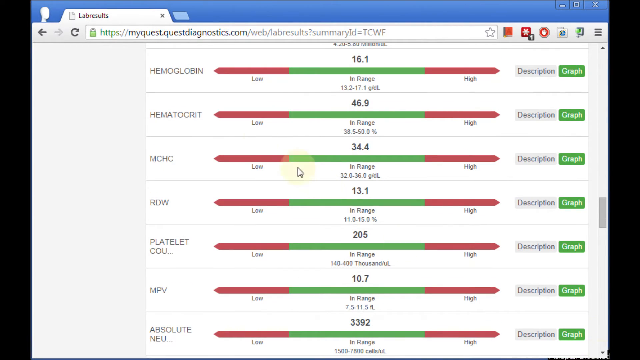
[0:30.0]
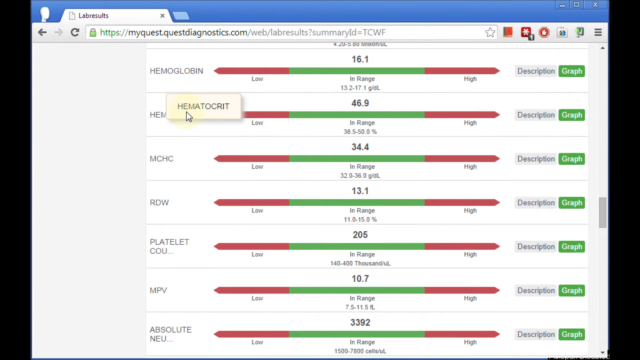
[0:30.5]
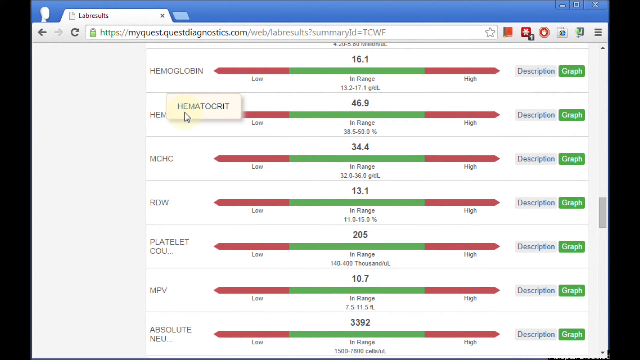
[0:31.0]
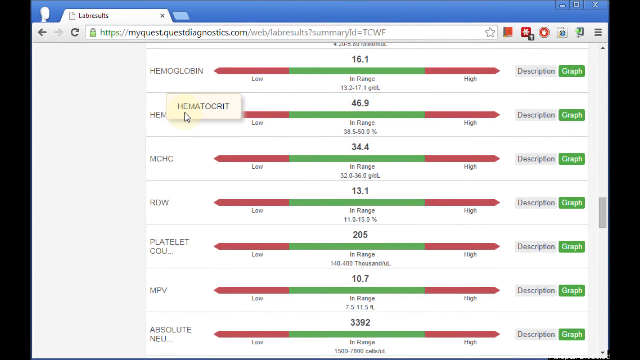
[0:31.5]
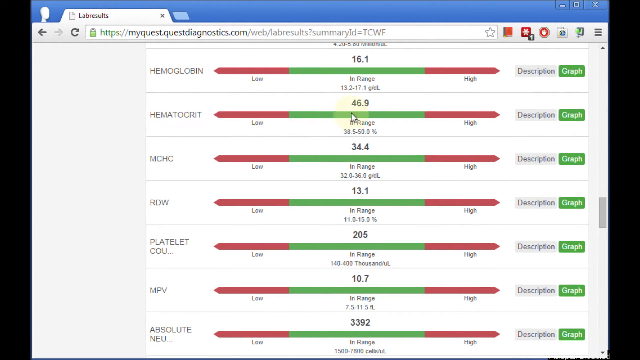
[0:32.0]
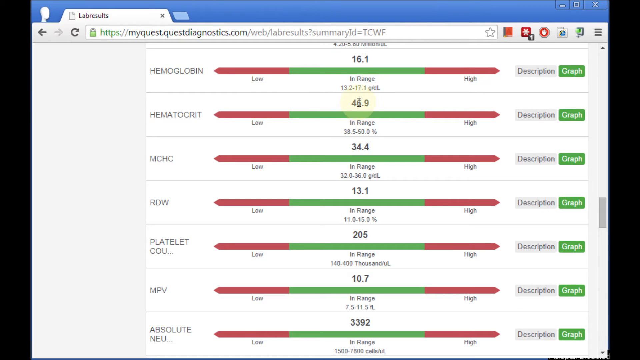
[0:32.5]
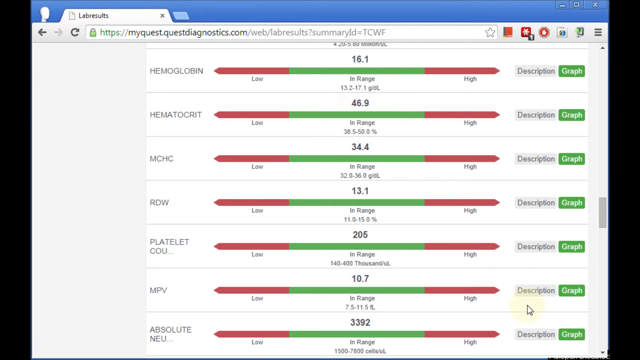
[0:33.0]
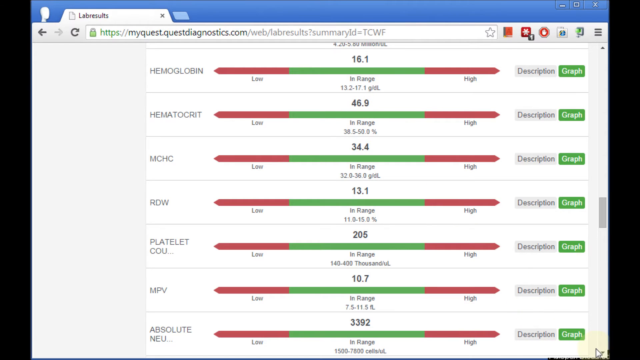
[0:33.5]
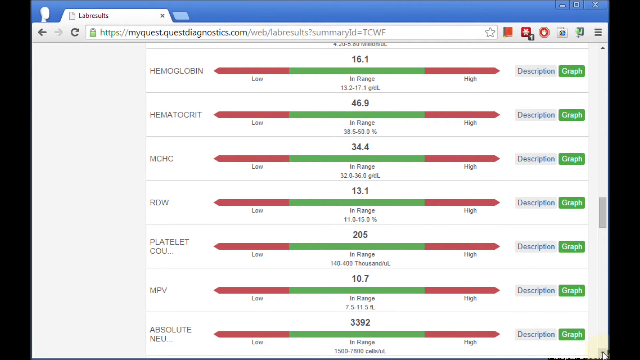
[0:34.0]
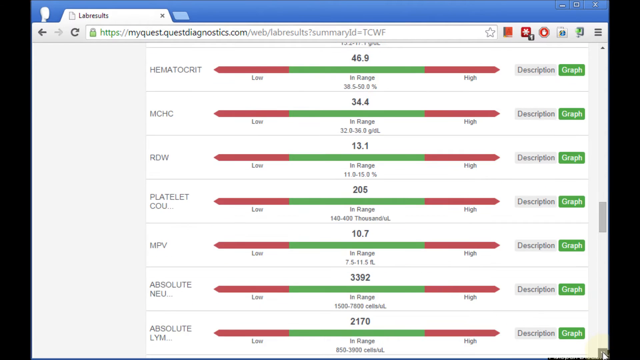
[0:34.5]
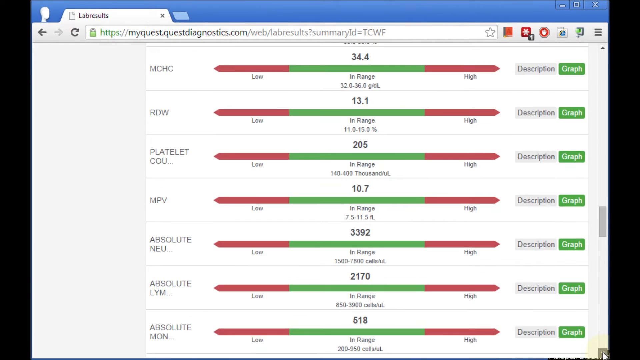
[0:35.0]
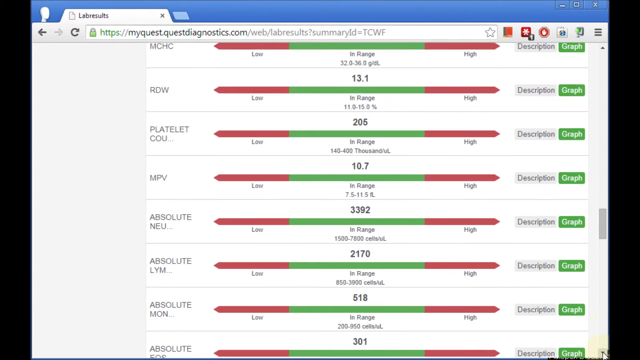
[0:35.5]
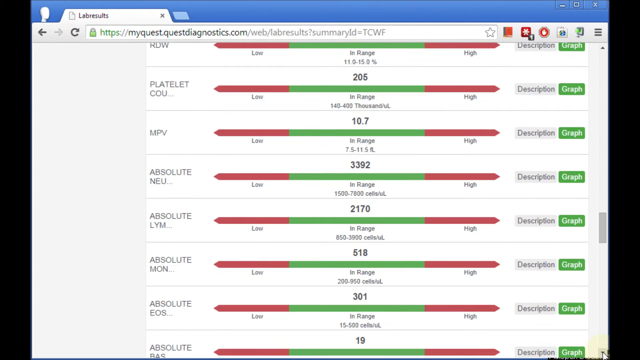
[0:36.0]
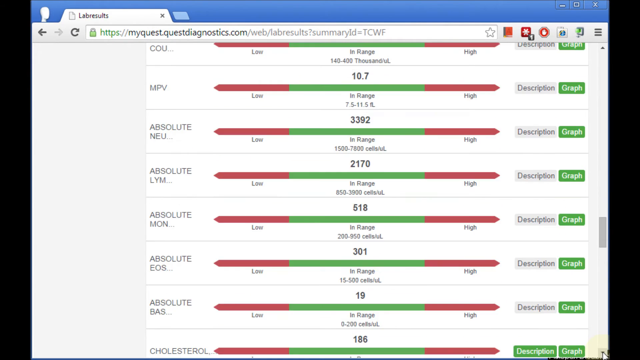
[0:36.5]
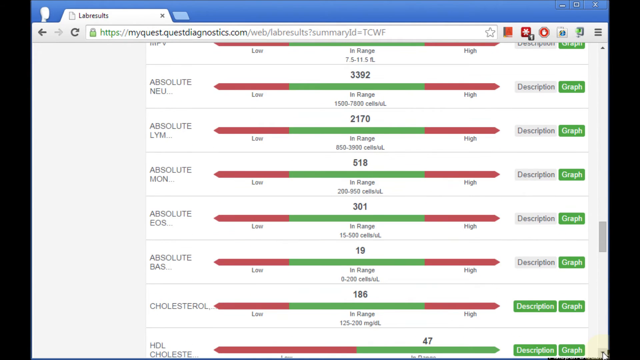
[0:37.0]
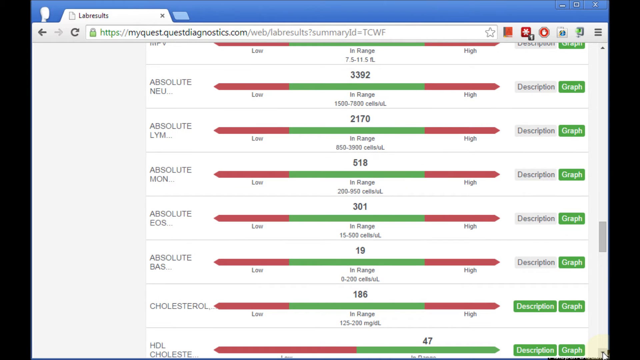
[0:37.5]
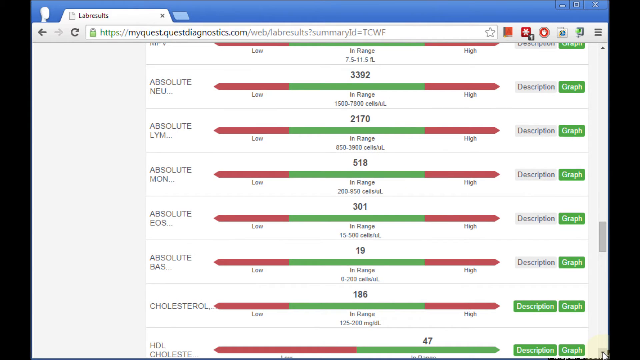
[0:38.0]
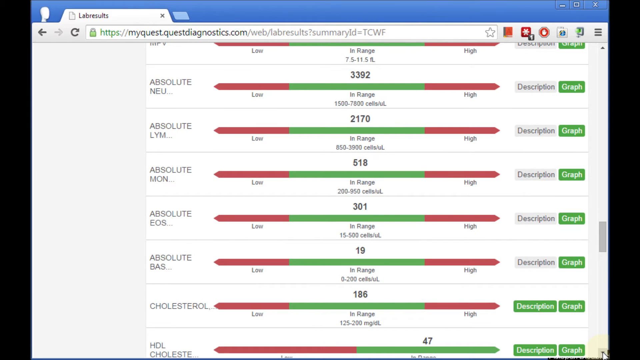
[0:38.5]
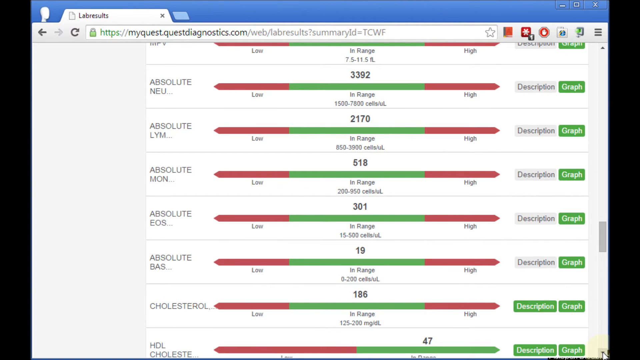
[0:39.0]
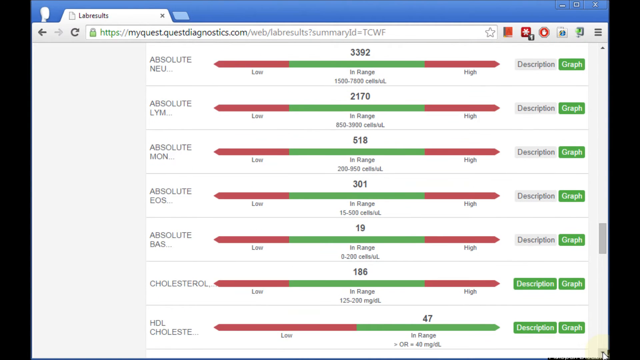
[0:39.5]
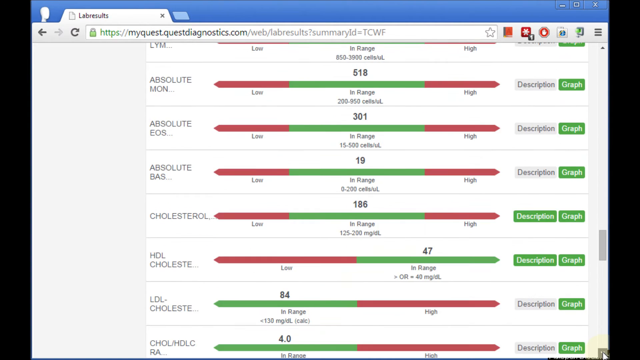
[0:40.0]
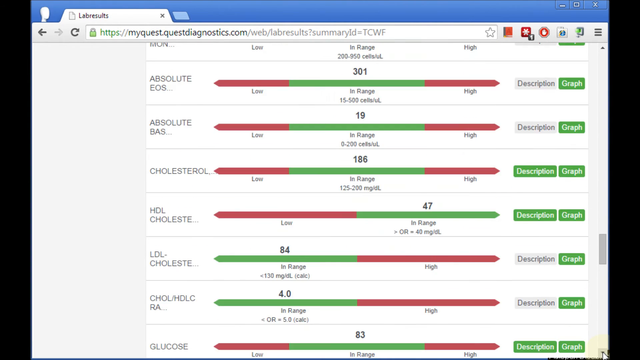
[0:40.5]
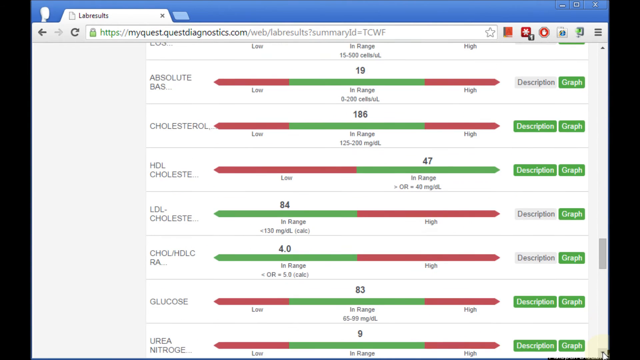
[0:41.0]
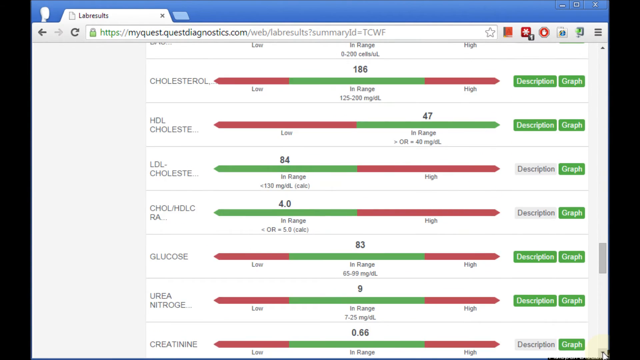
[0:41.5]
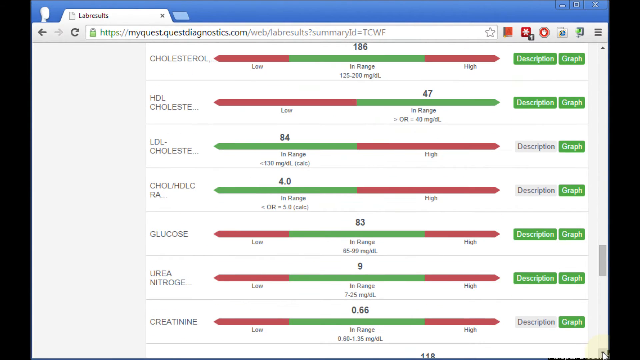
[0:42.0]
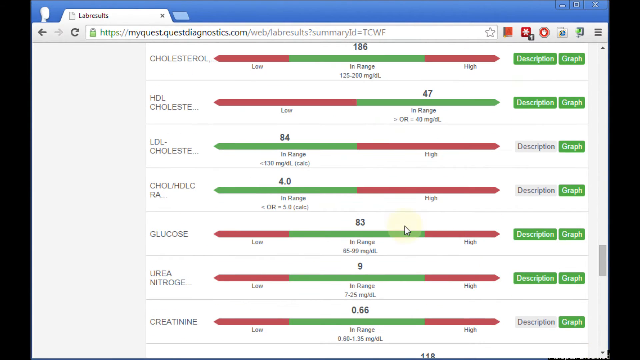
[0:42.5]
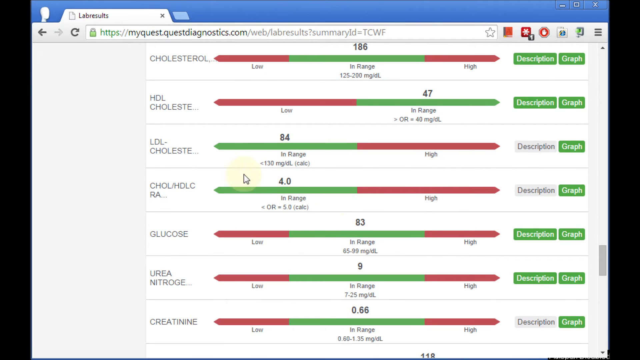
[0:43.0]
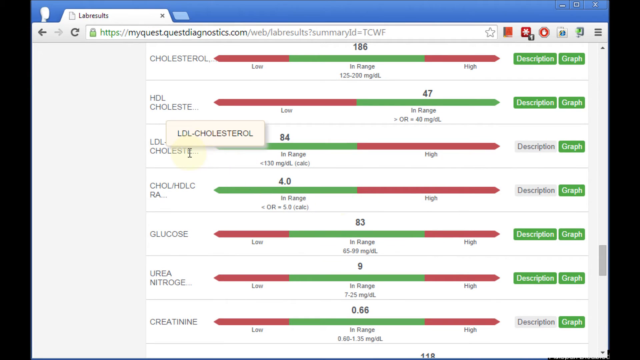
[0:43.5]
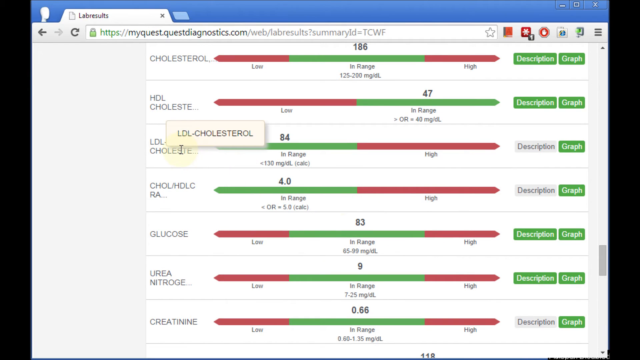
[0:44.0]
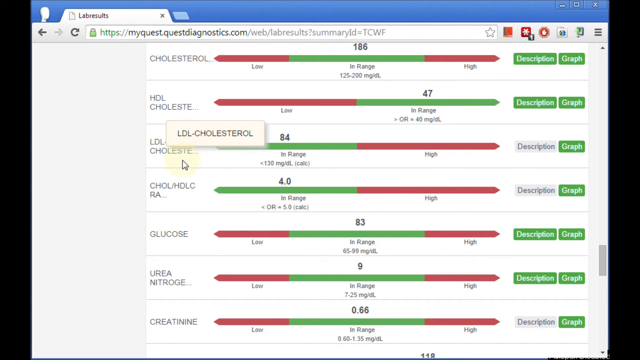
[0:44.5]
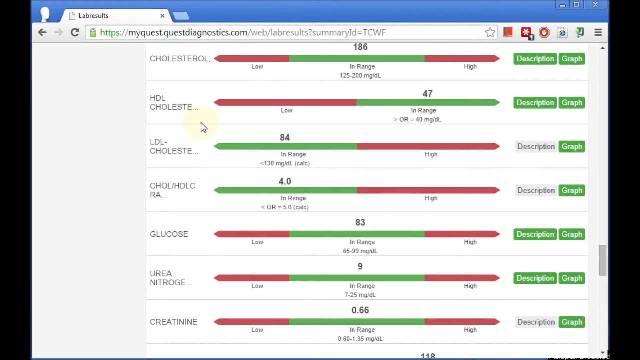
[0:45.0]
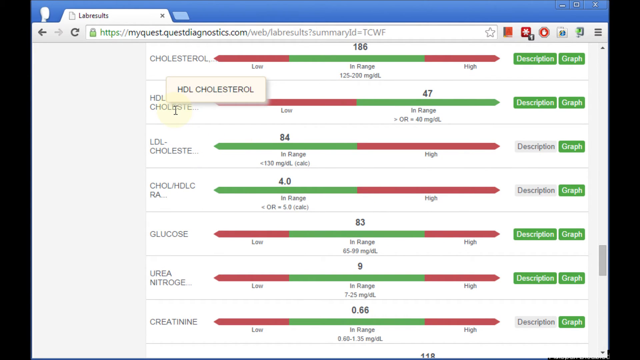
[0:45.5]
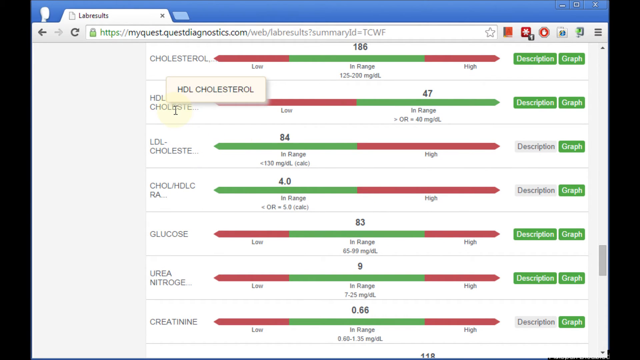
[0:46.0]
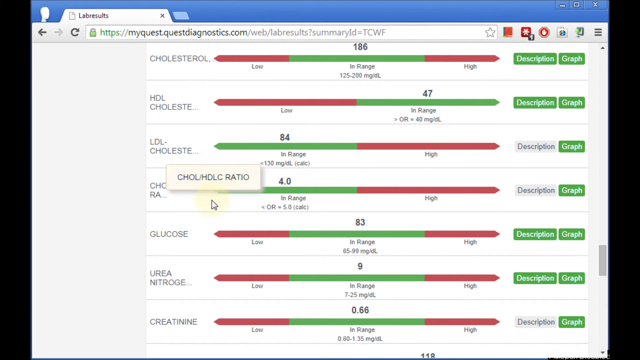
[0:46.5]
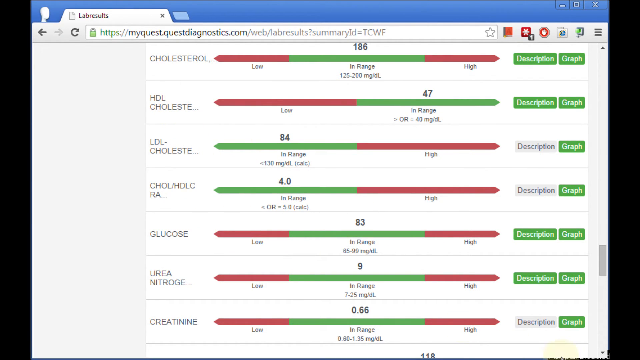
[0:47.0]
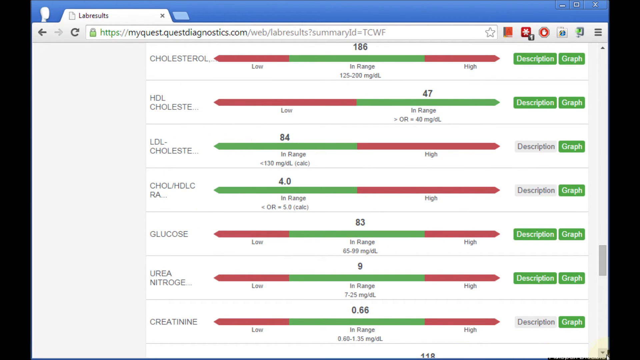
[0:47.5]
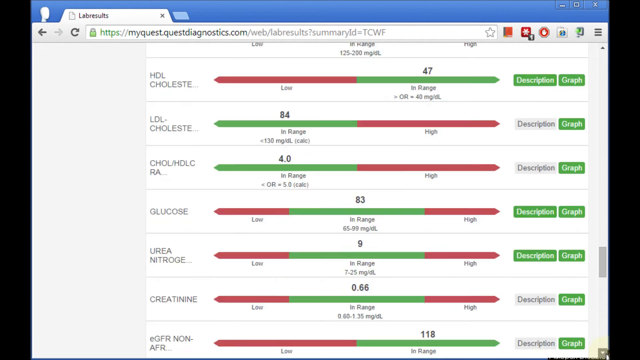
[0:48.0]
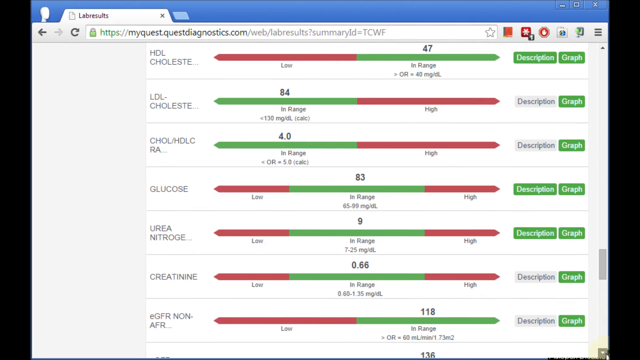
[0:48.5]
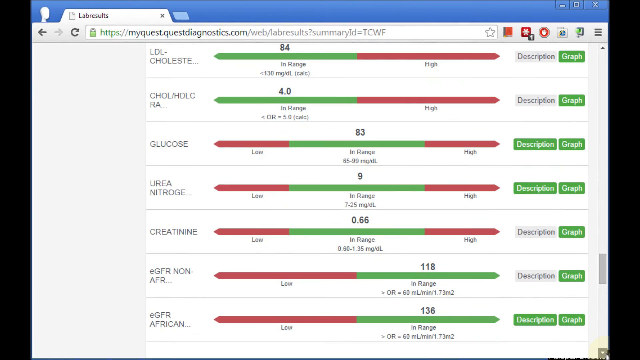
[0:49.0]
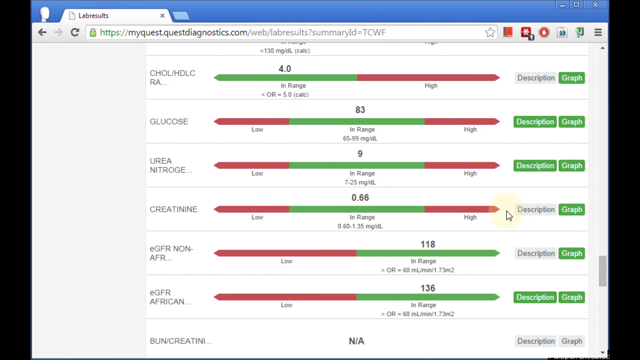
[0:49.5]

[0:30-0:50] Somebody's lab results are shown, listing items such as hemoglobin, hematocrit, MHHC, platelet, and MBV. Each has a line graph divided into three parts: a low part in red, a middle part in green labeled "in range", and a high part in red. The person's stats appear at the top, indicating whether they are low or high. A mouse cursor moves around, seemingly to analyze the results, and the page scrolls down. All the items on this page say "absolute", and the bottom number is somewhat cut off. Cholesterol, LDL cholesterol, HDL cholesterol, and creatine appear. When the mouse hovers over a cut-off name, the full word is shown. The person continues scrolling down through the results.